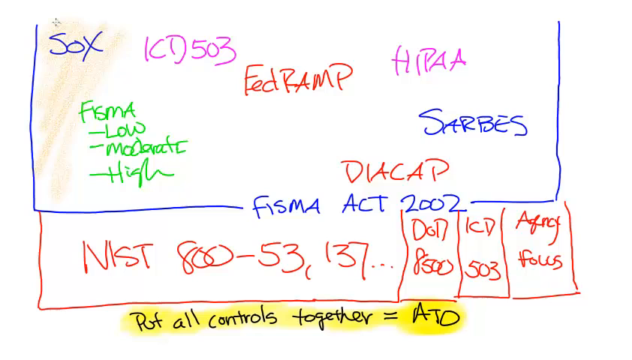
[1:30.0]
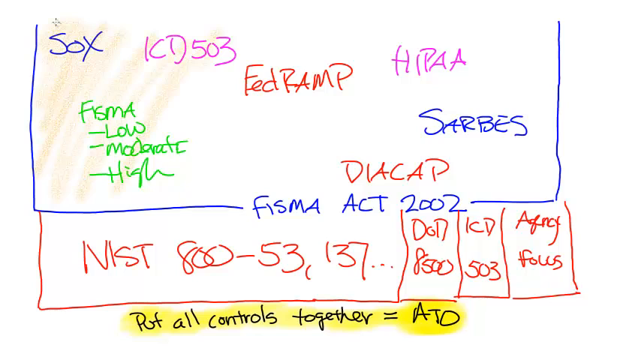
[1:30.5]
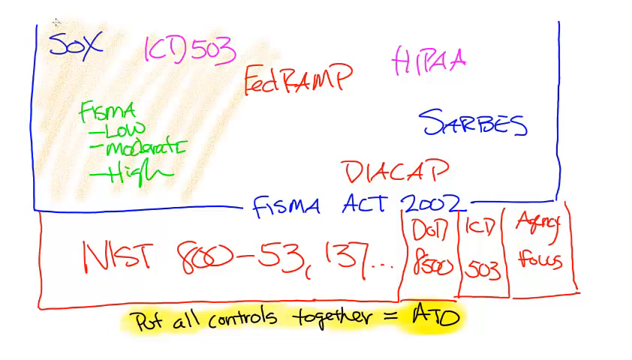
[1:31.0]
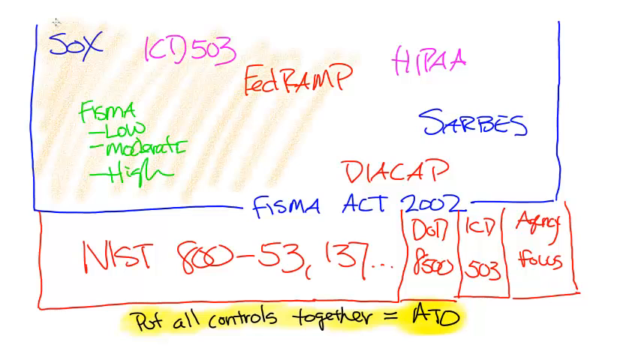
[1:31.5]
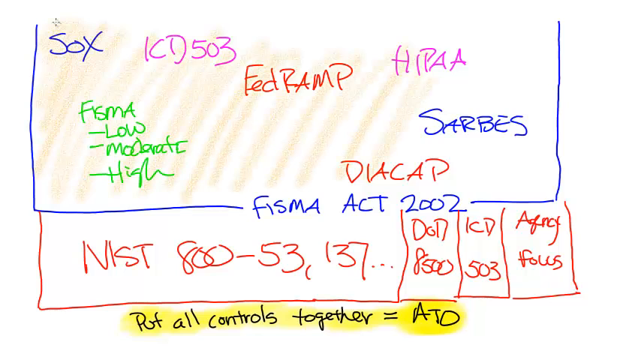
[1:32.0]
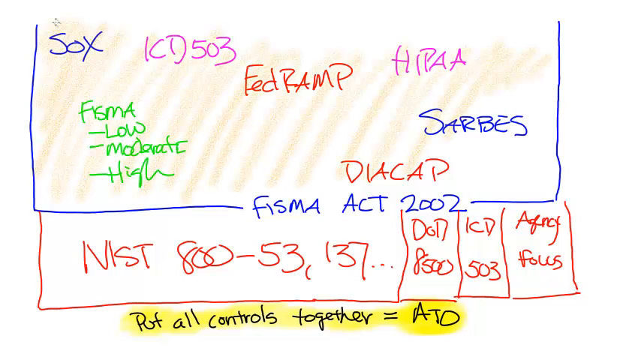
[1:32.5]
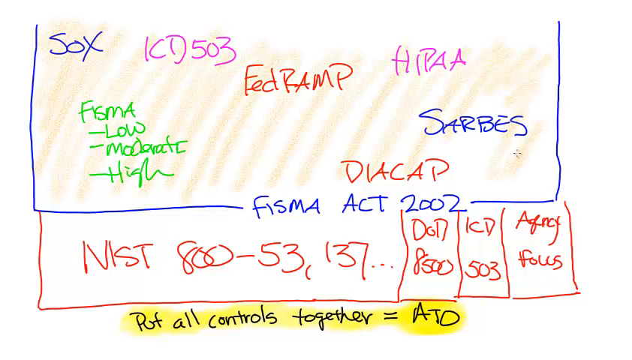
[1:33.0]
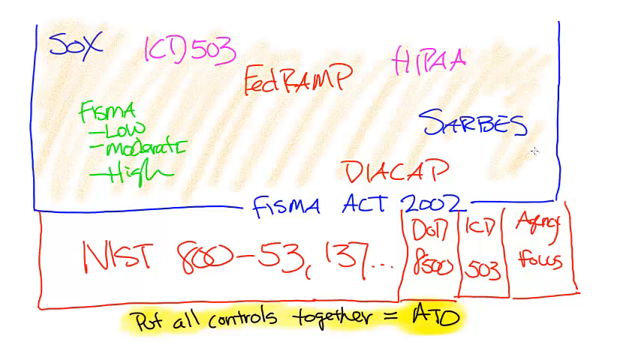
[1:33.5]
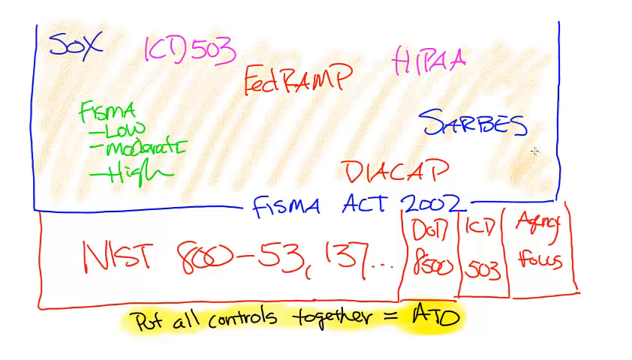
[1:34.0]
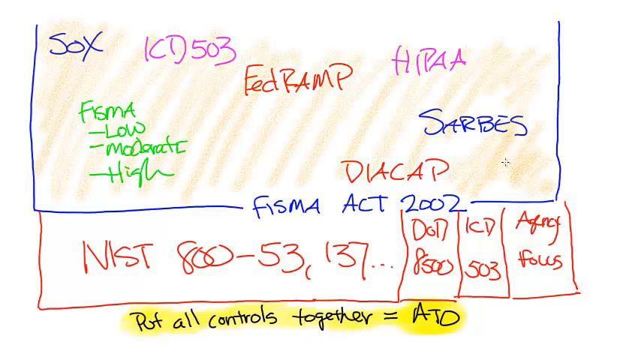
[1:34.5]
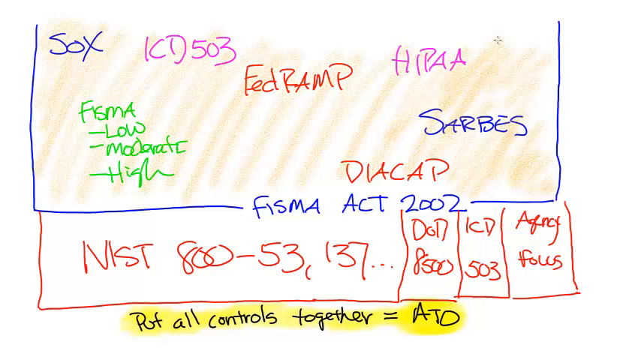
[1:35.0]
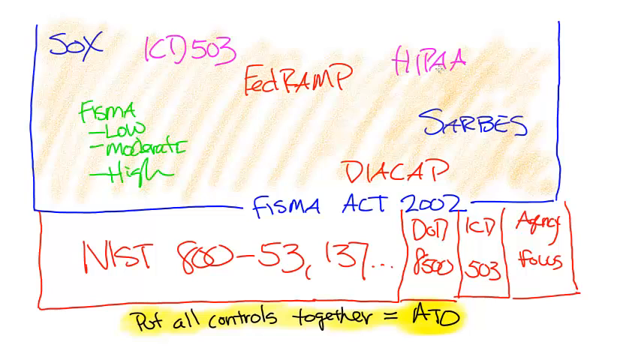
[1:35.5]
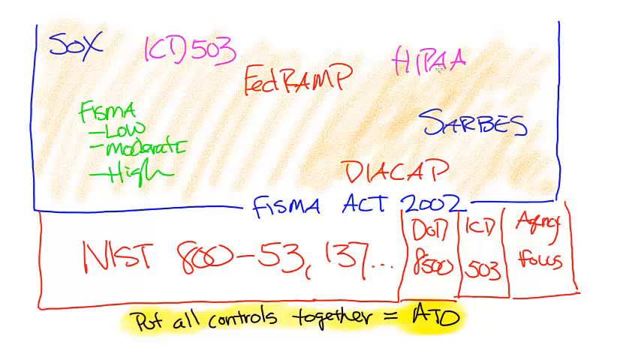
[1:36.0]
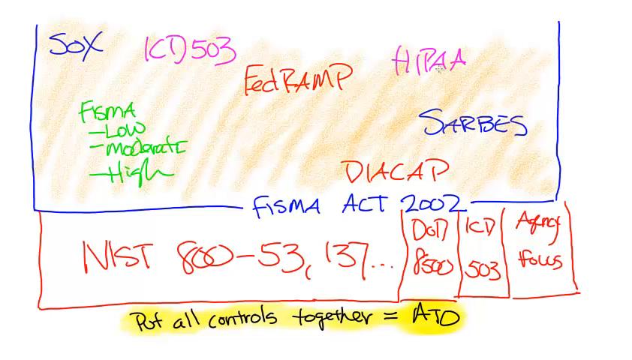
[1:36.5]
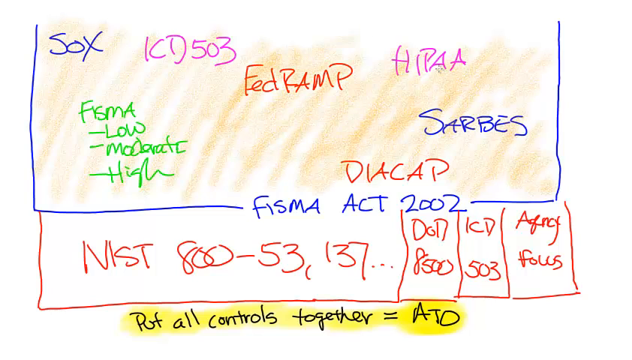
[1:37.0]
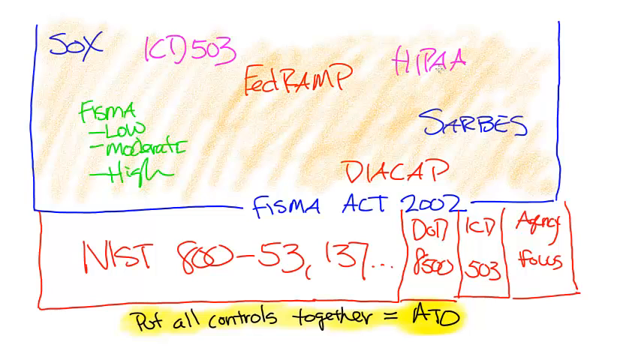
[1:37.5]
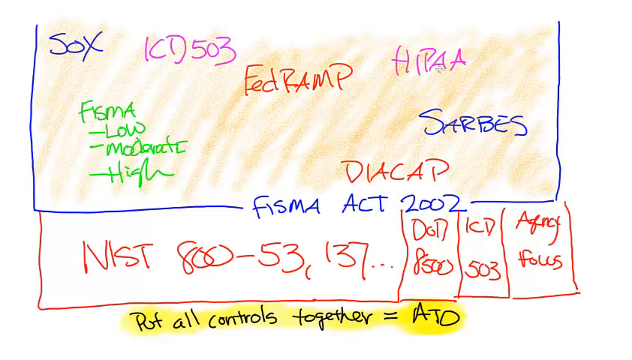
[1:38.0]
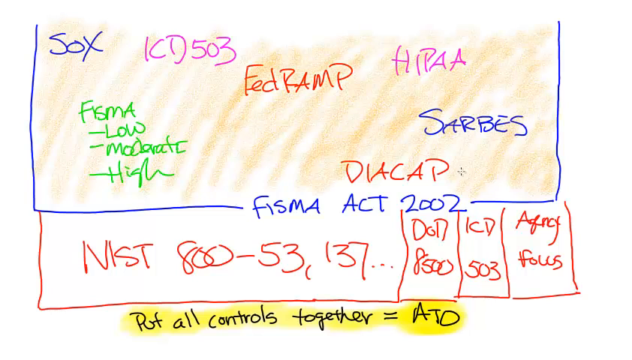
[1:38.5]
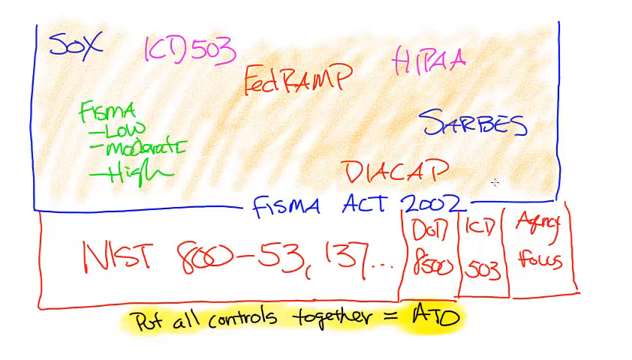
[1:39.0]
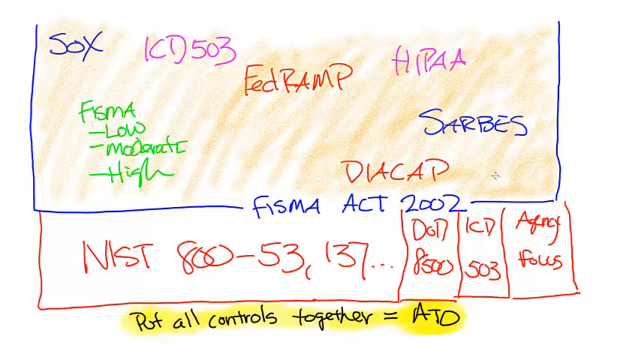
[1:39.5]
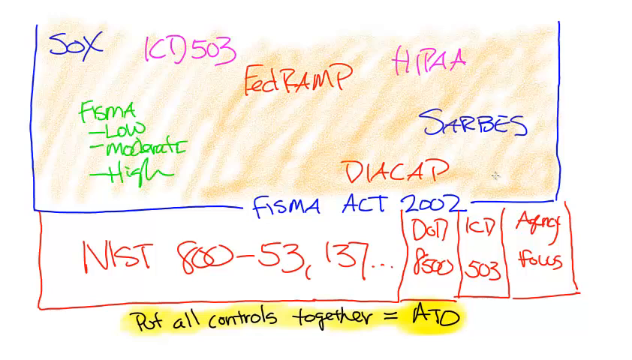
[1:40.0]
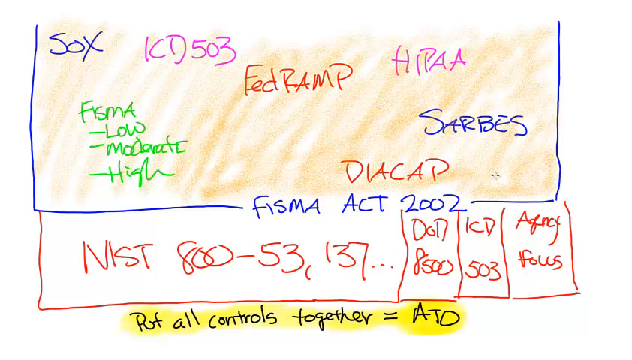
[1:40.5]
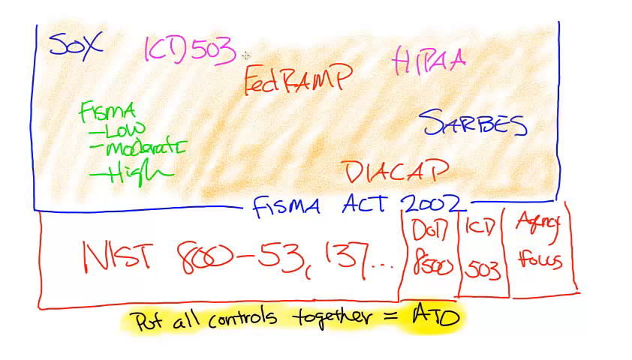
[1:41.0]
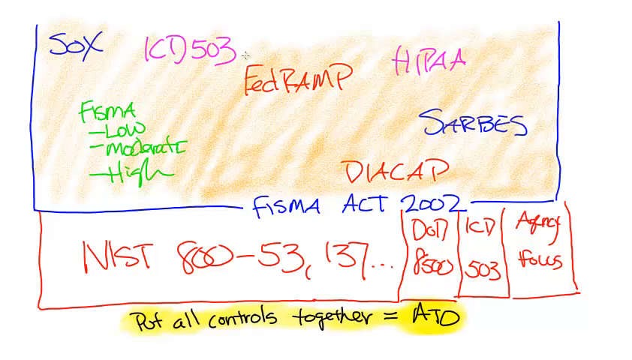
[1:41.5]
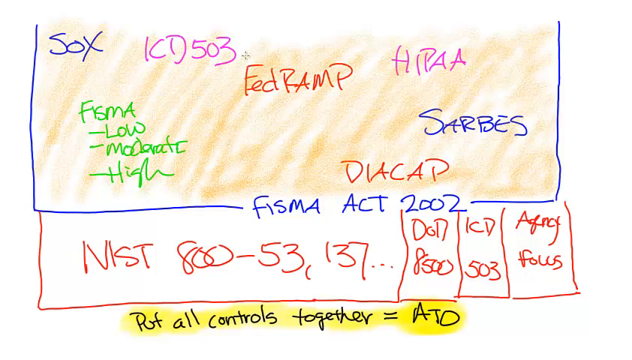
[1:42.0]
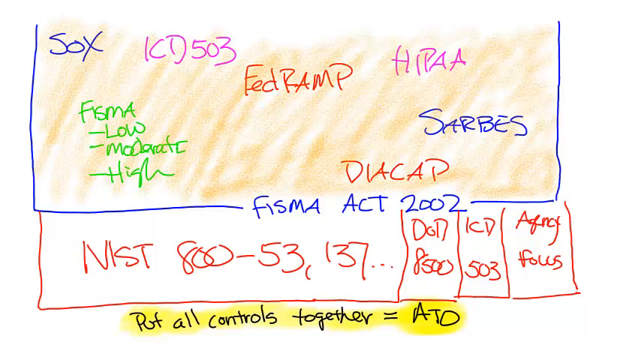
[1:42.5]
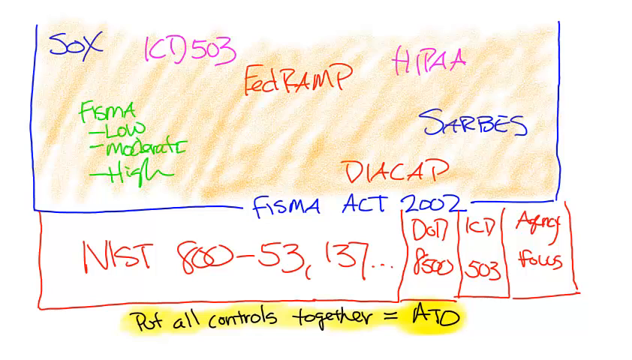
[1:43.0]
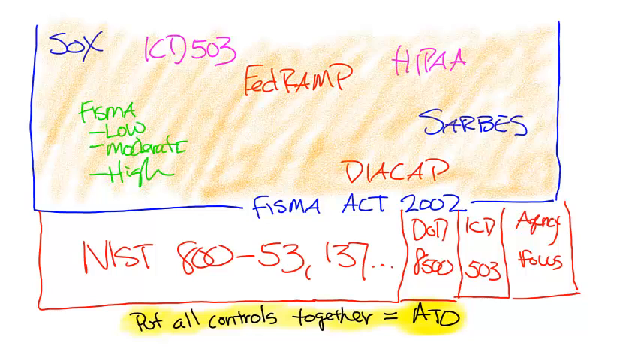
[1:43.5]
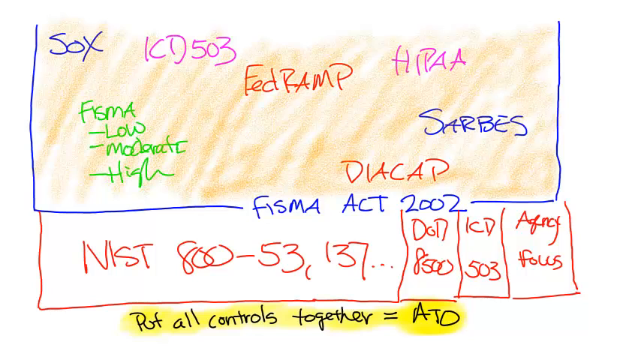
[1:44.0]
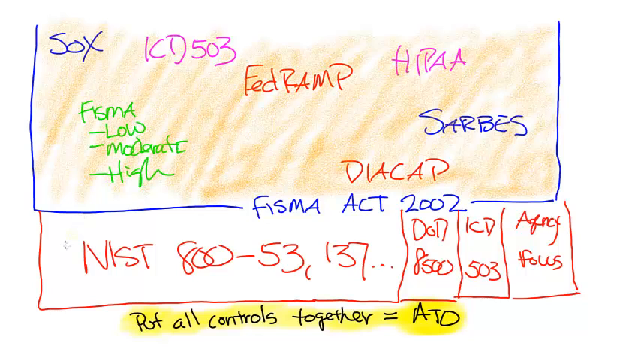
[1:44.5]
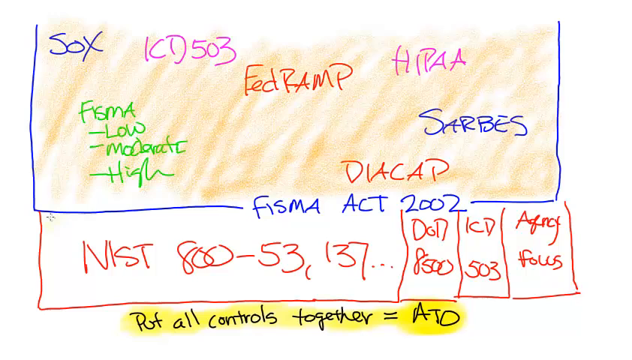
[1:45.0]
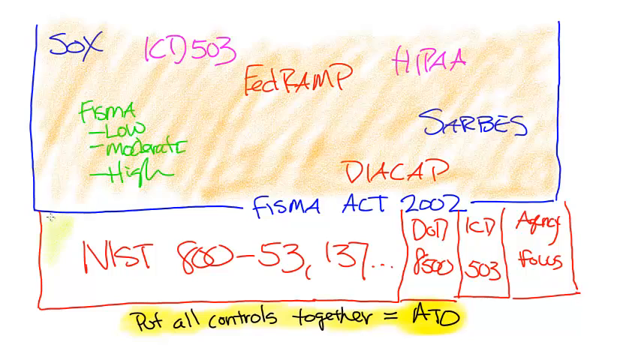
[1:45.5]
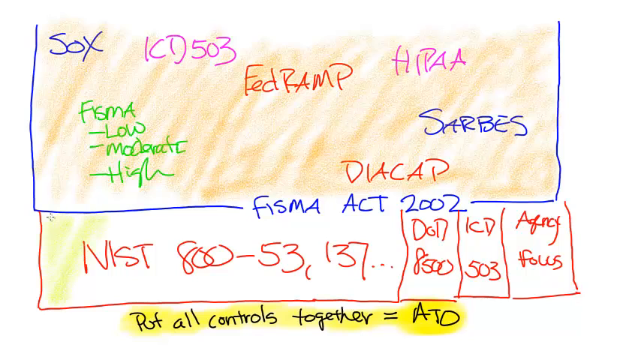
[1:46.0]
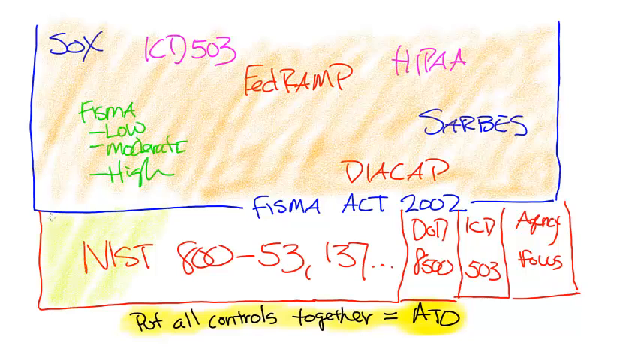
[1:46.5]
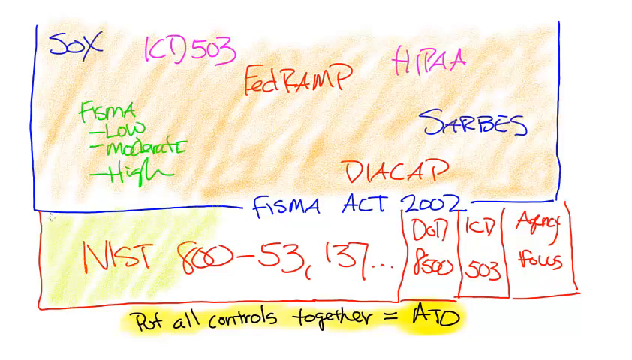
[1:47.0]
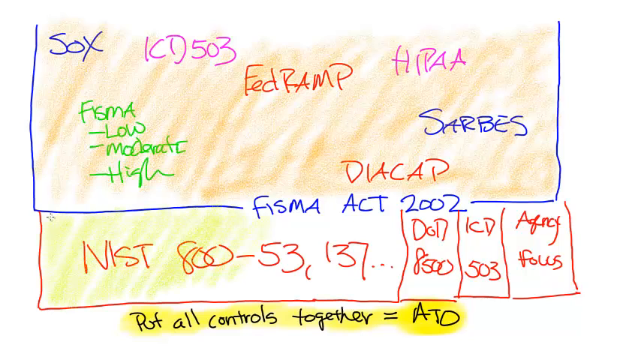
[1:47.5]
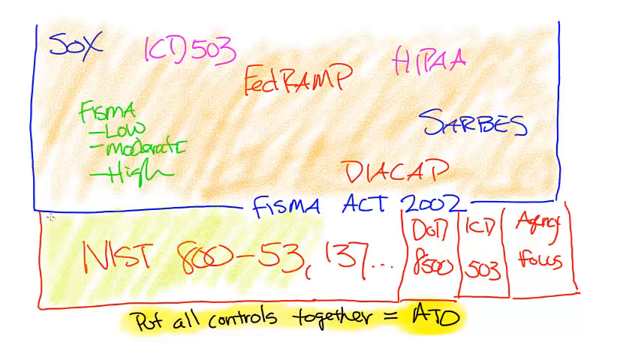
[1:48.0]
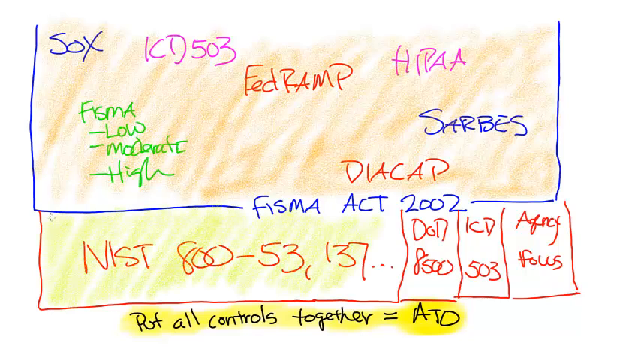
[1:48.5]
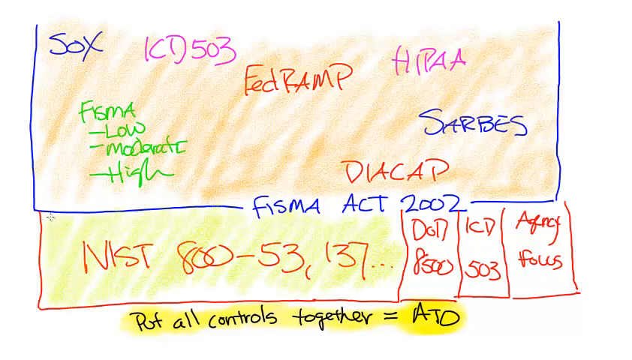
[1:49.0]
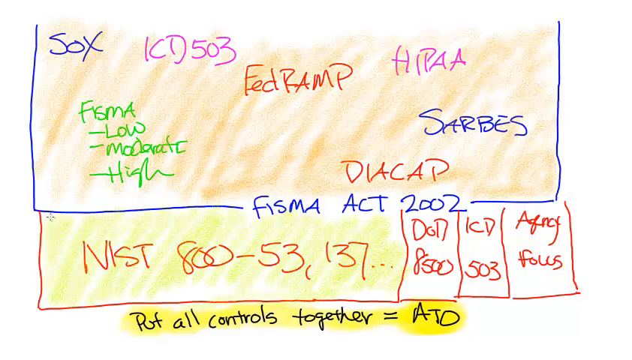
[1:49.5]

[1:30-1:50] The pointer is in the top left of the blue rectangular section, continuing to highlight at a downward-right angle with an up-and-down coloring motion in a brownish orange color. When it reaches the bottom right of the blue rectangle, it retraces its path, highlighting back up and to the left. At the spot where "FedRAMP" is written it heads back to the right, coloring across and then down once it reaches the blue line, then back left across the bottom until it is under "FedRAMP". It then moves right beside "FedRAMP" and colors in to the left of it. Next the pointer moves to the large red rectangular section and, starting in the top left, colors in the background of that section in a yellowish green color, using the same downward-right angle and coloring back and forth, up and down, until it reaches the right side of the section.